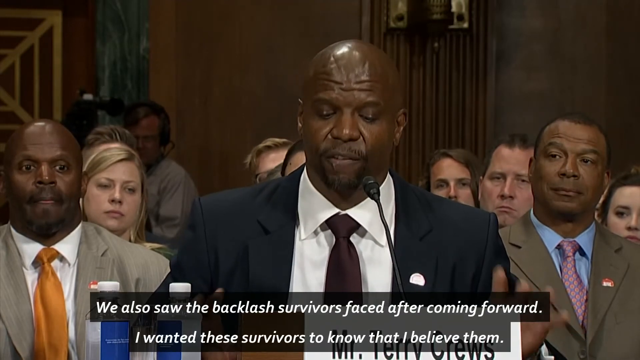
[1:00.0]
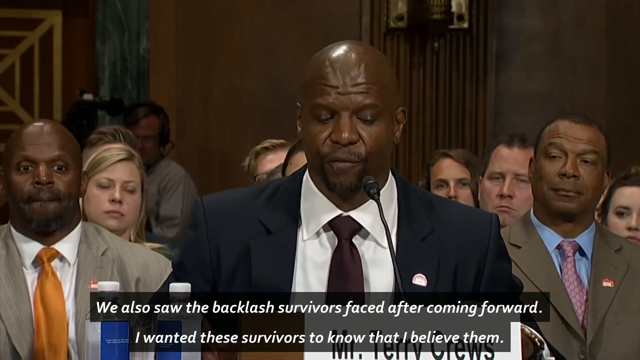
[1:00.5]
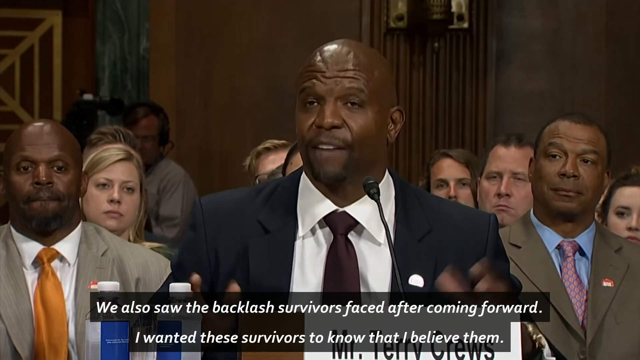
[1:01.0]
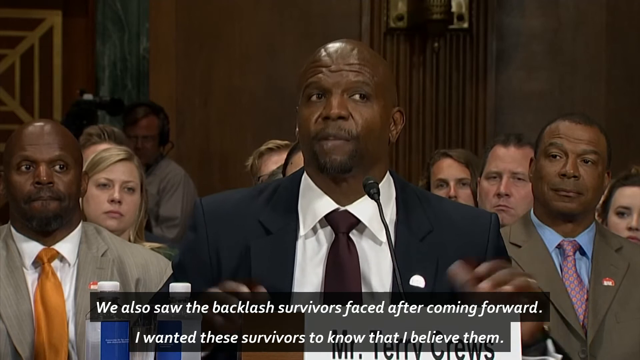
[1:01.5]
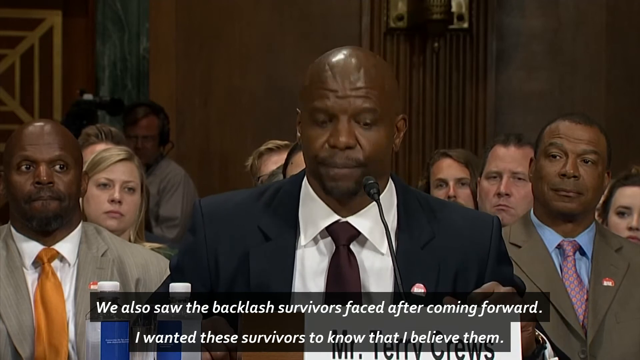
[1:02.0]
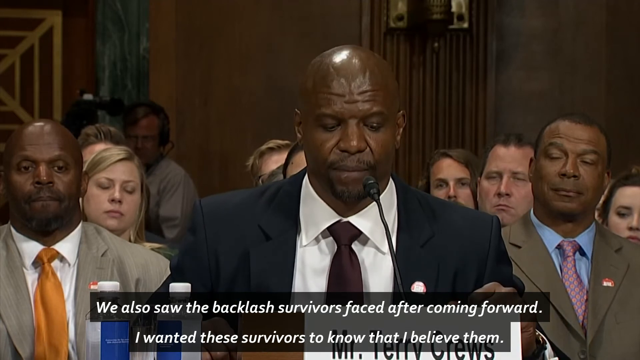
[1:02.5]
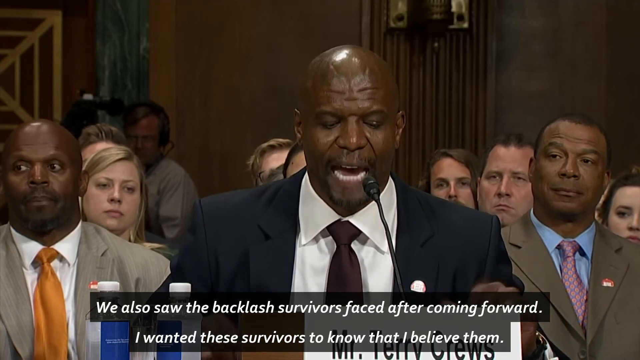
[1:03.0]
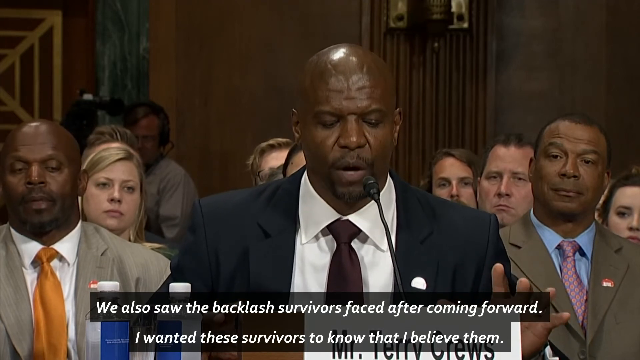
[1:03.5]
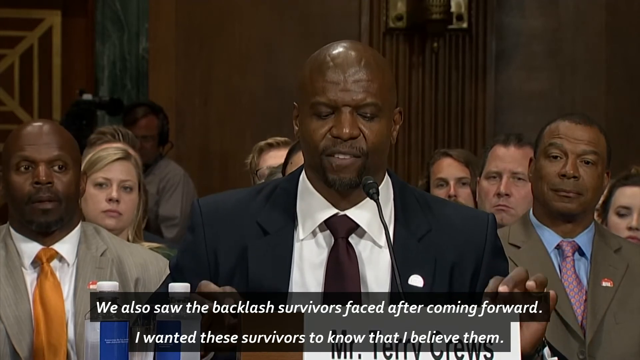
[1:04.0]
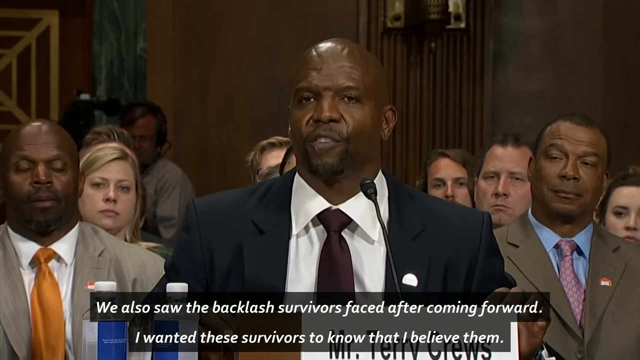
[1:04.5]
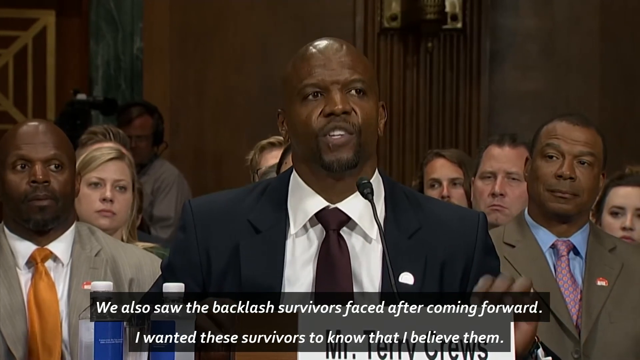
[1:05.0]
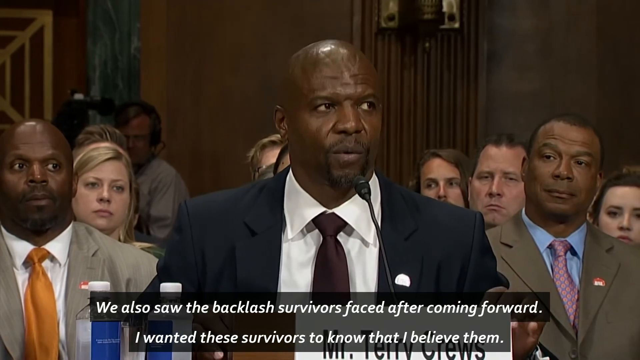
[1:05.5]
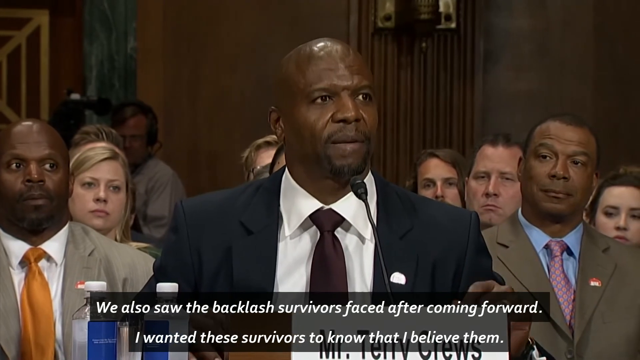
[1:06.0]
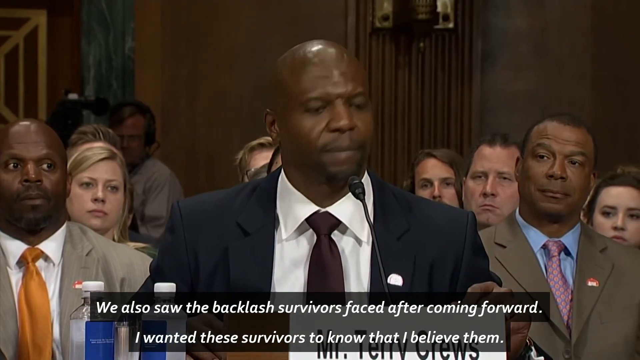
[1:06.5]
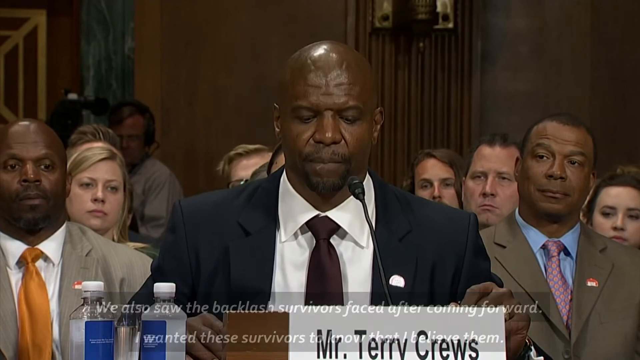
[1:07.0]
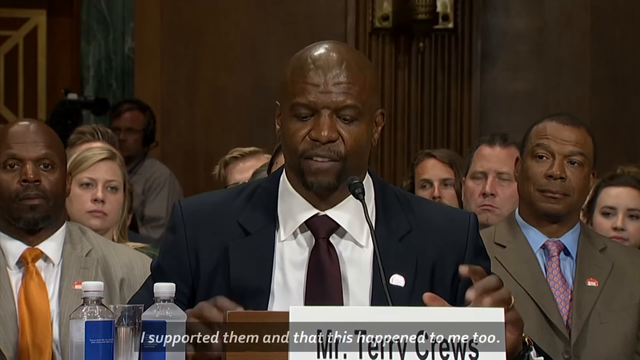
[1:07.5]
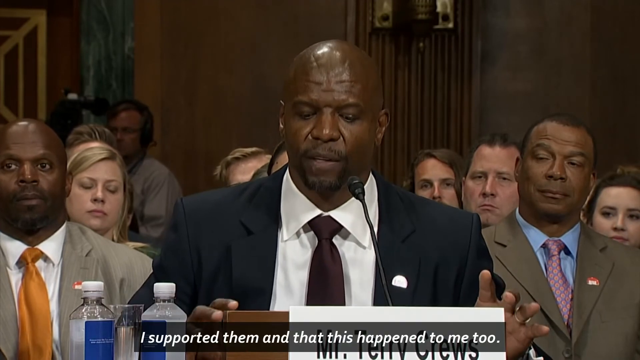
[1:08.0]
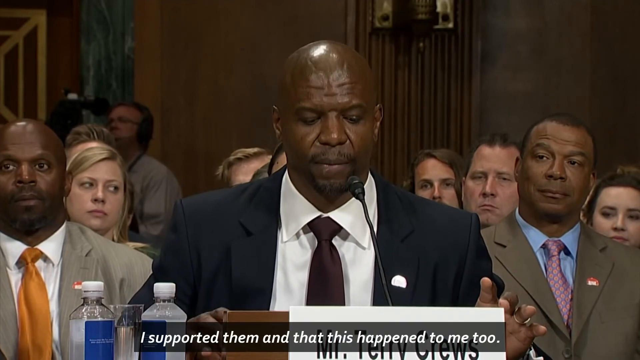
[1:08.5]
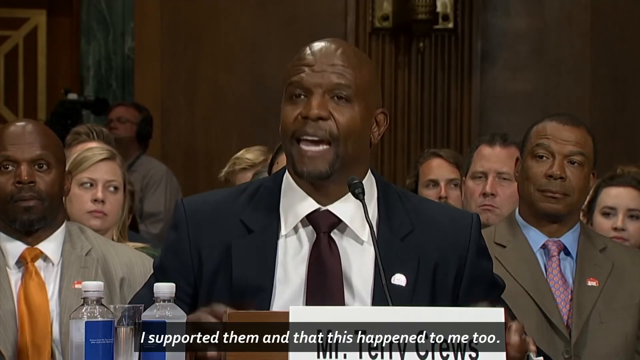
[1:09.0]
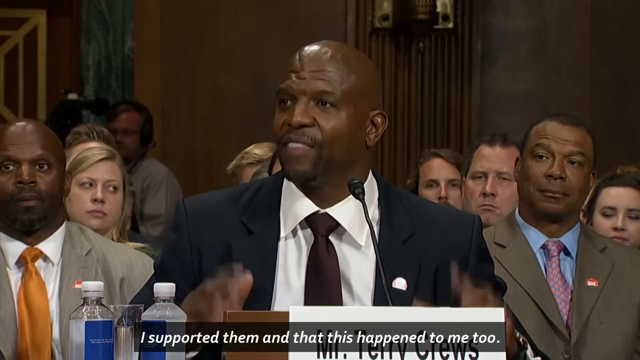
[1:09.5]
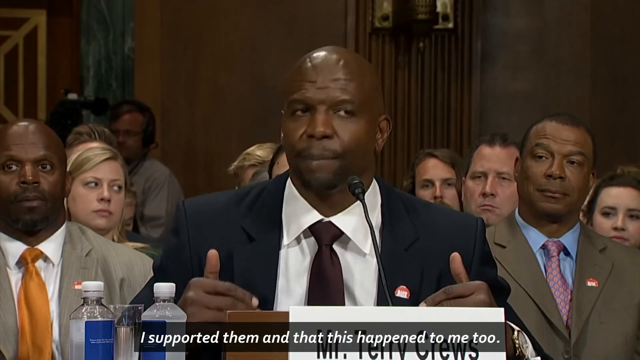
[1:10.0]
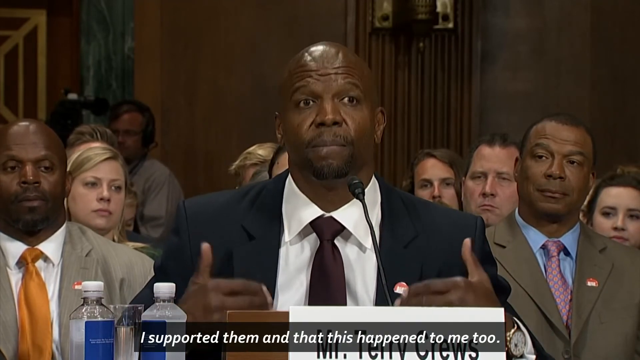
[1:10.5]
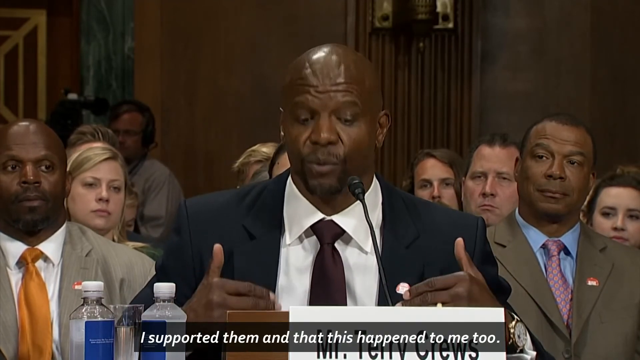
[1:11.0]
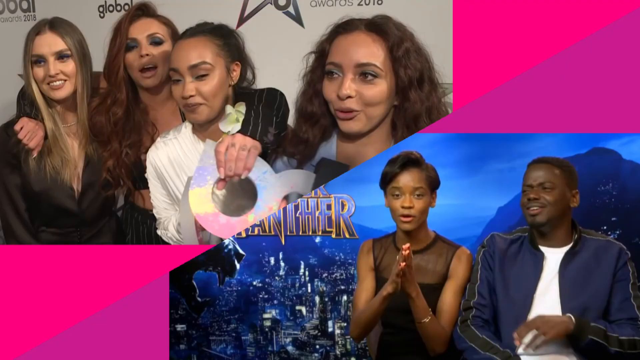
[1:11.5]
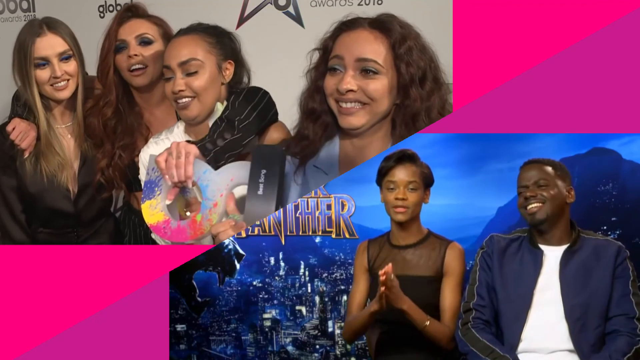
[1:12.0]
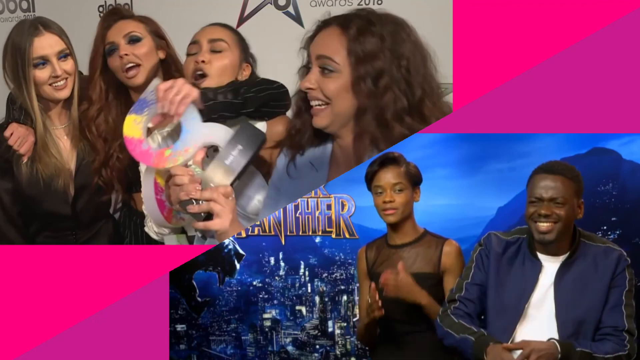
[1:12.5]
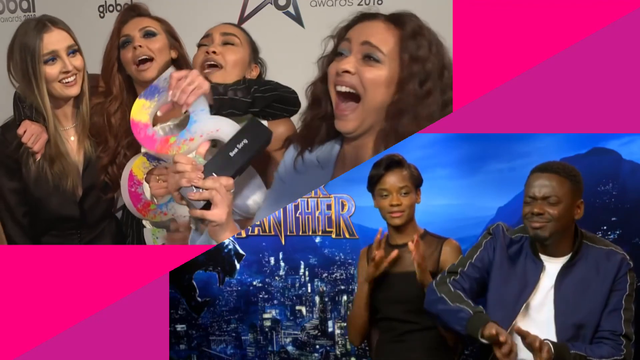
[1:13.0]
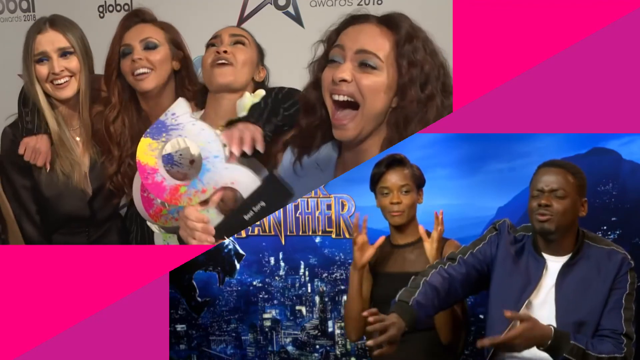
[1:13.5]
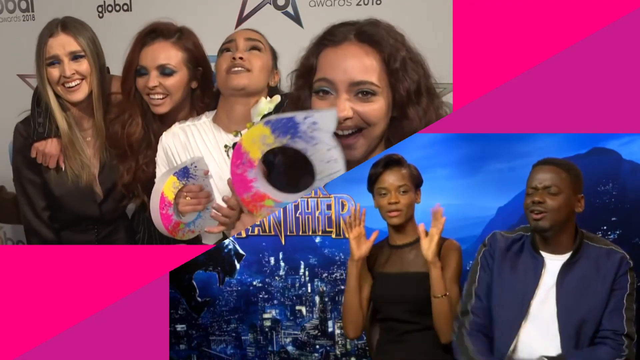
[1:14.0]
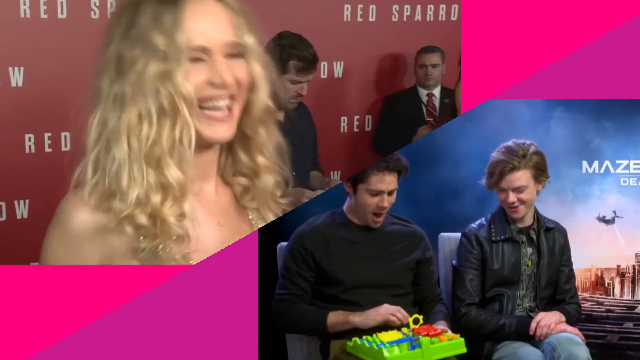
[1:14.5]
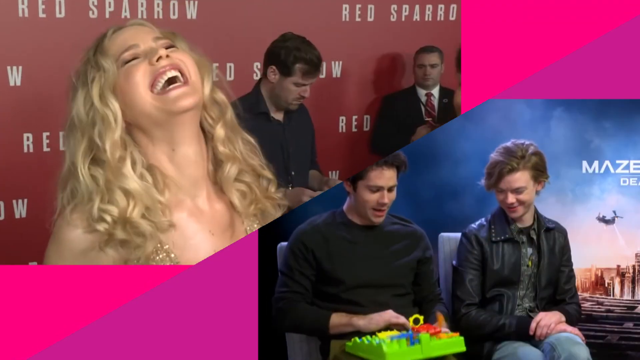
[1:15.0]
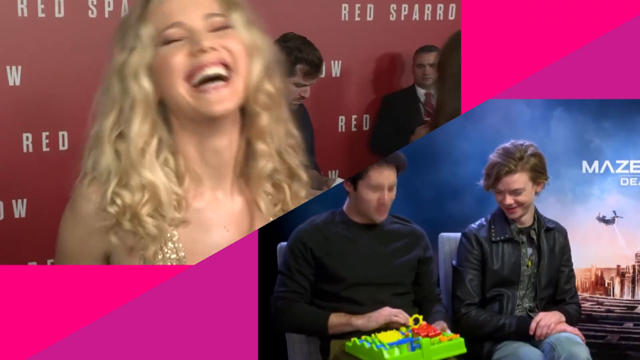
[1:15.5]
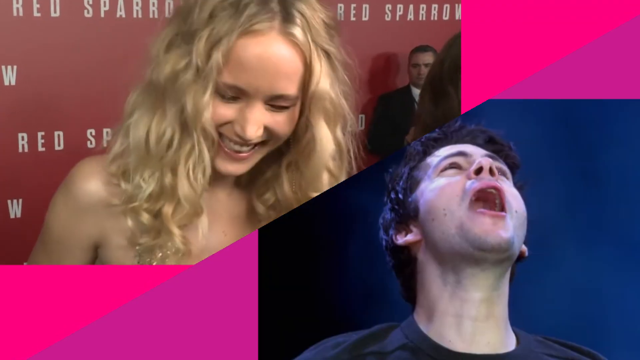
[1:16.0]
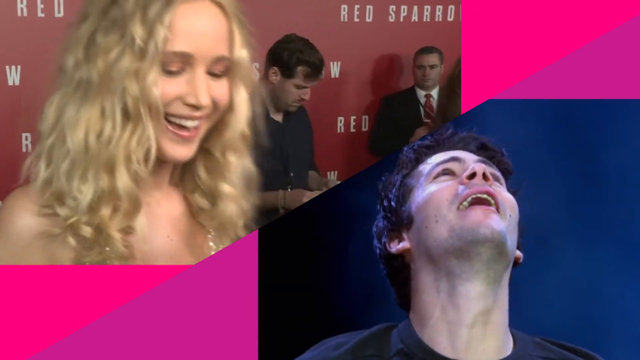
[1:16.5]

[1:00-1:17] Terry keeps speaking and makes gestures with his hand. Two bottles are on his left; they appear to be plastic bottles of water with a blue logo. The screen then jumps to a group of people on the red carpet holding some kind of merchandise, waving it around frantically and smiling; one of the items may be an award they won. Next the screen is split diagonally, showing Black Panther, as productions are advertised. The background is red. The last screen shows a girl with wavy blonde hair laughing on the left-hand side, while the white man on the bottom right-hand side laughs as well.